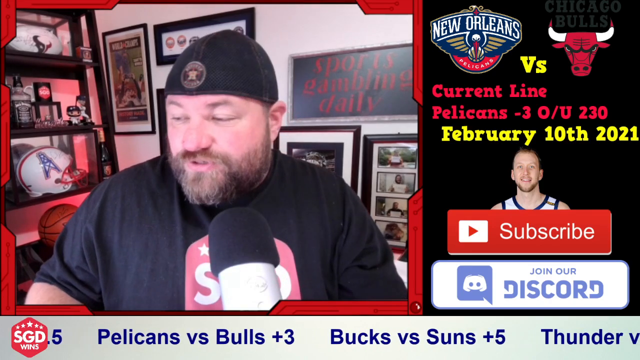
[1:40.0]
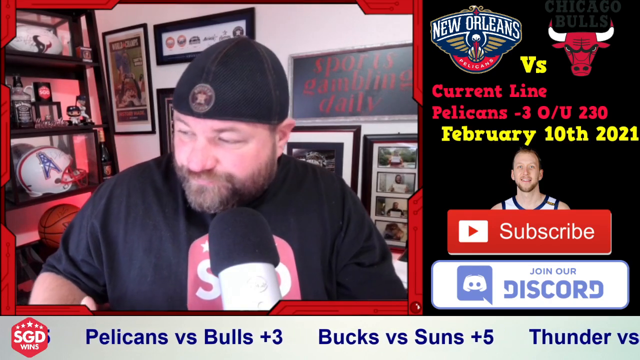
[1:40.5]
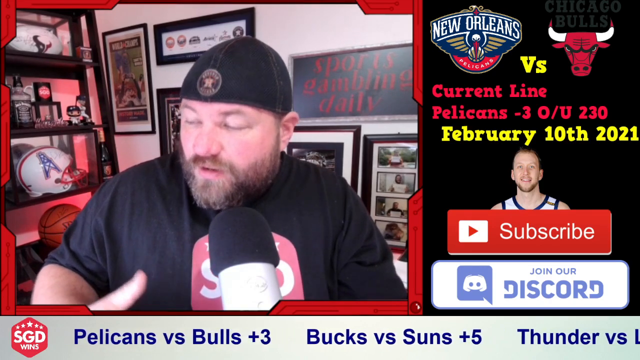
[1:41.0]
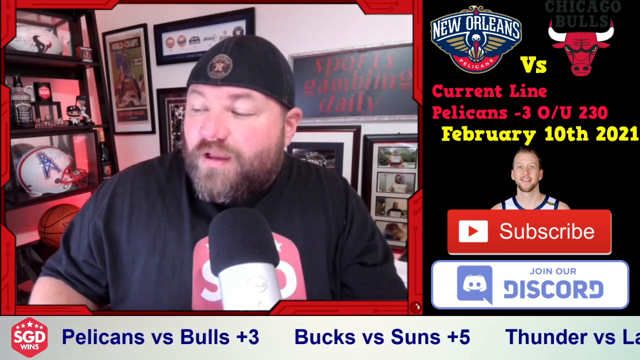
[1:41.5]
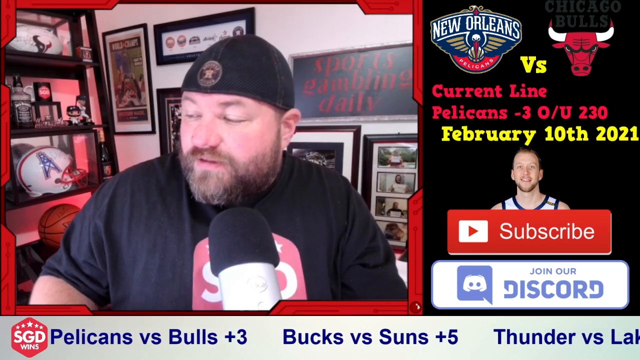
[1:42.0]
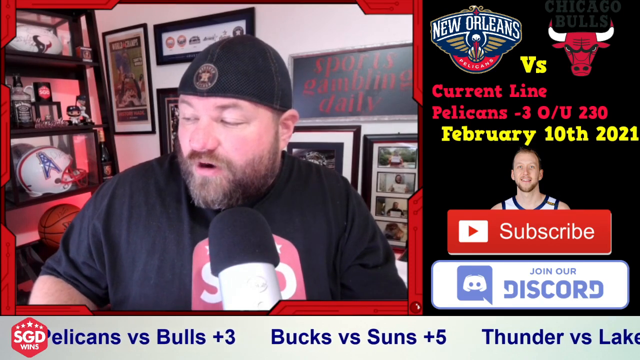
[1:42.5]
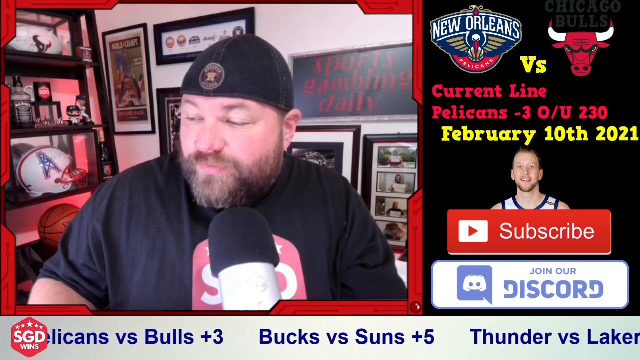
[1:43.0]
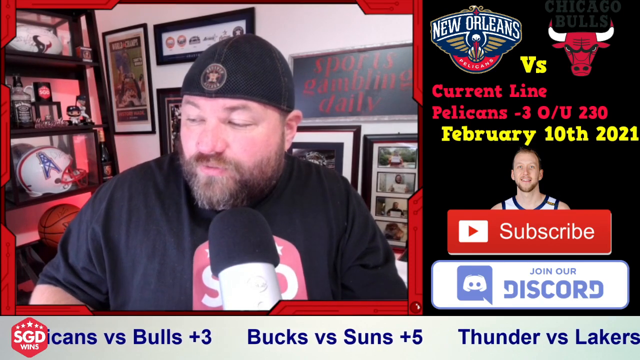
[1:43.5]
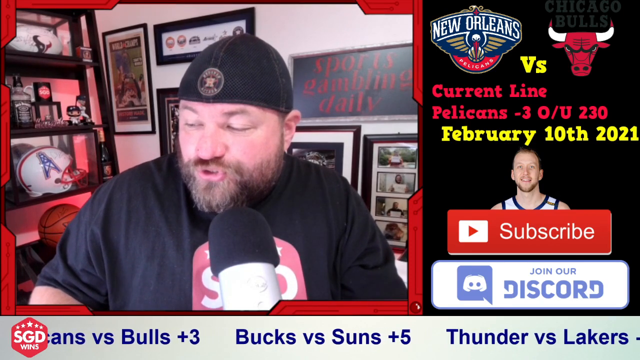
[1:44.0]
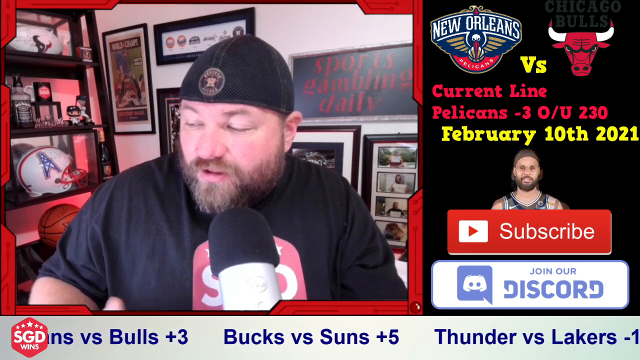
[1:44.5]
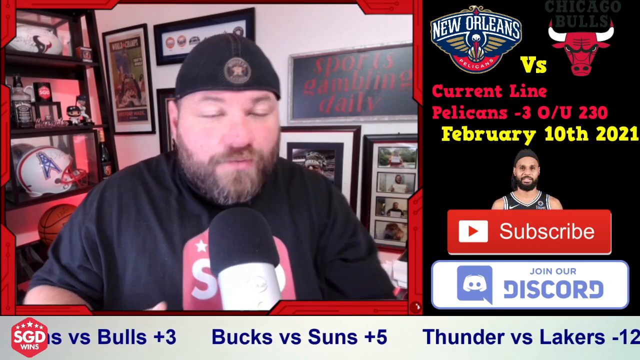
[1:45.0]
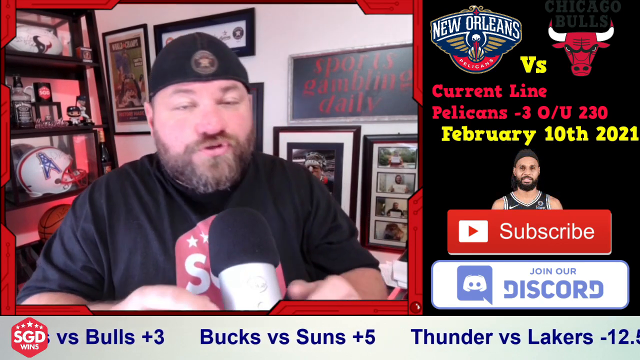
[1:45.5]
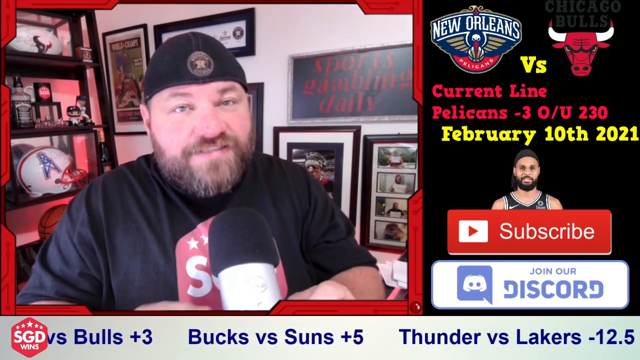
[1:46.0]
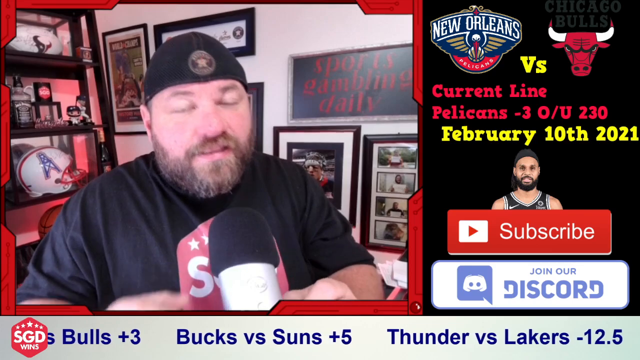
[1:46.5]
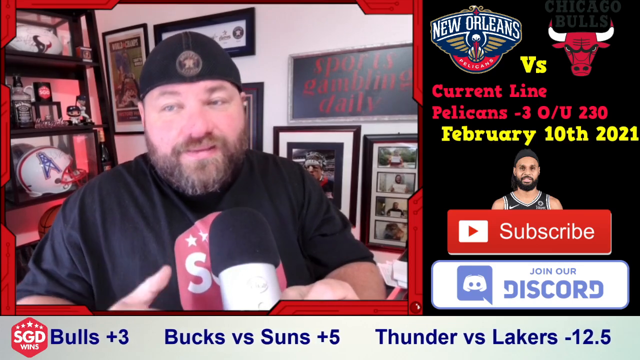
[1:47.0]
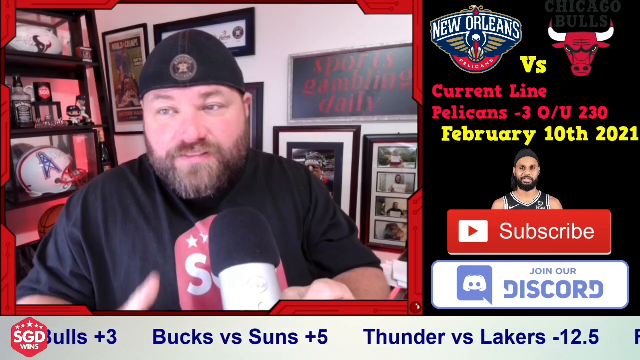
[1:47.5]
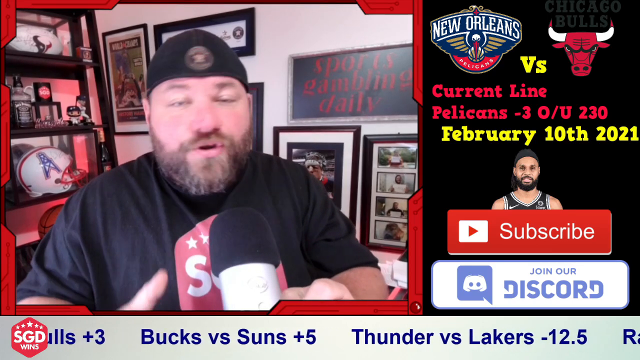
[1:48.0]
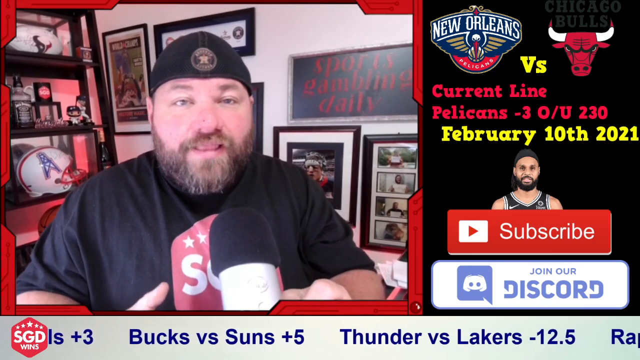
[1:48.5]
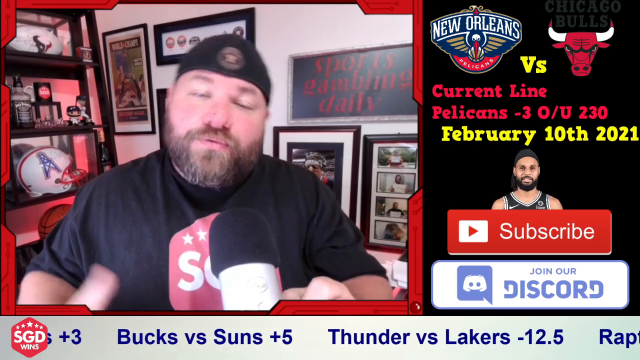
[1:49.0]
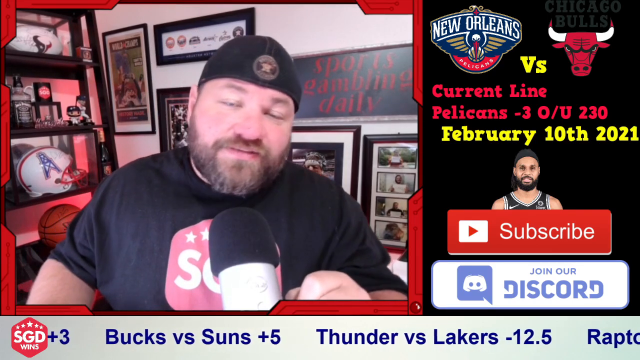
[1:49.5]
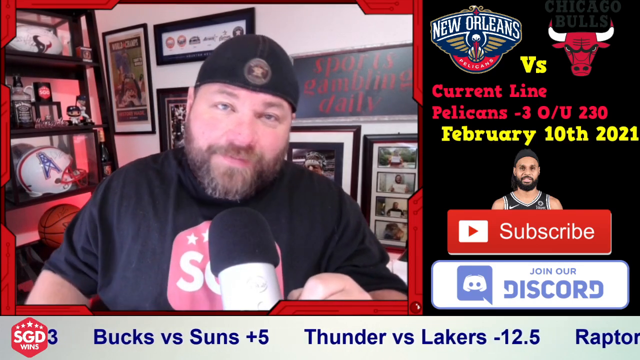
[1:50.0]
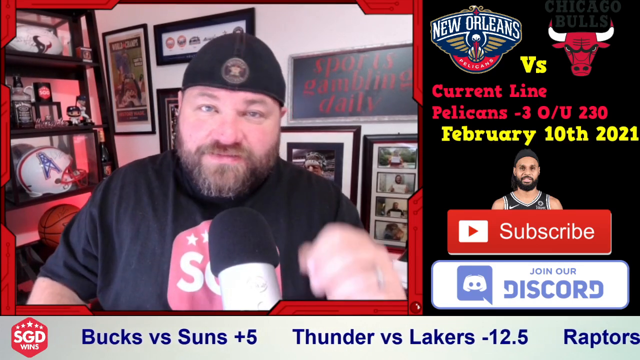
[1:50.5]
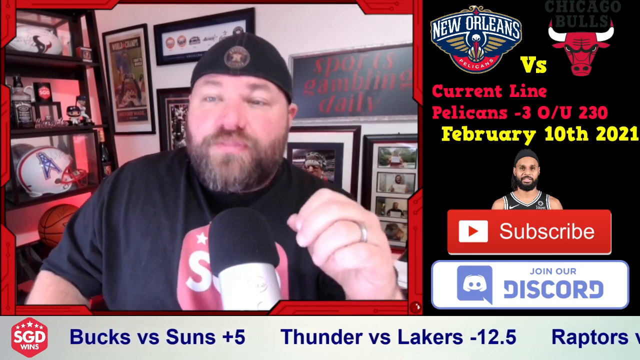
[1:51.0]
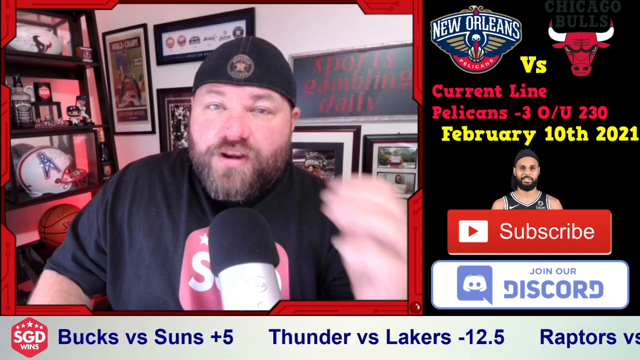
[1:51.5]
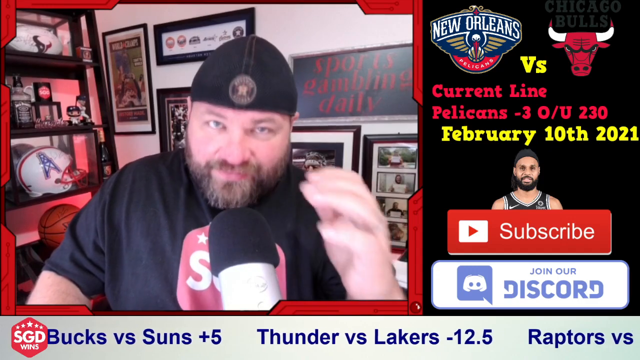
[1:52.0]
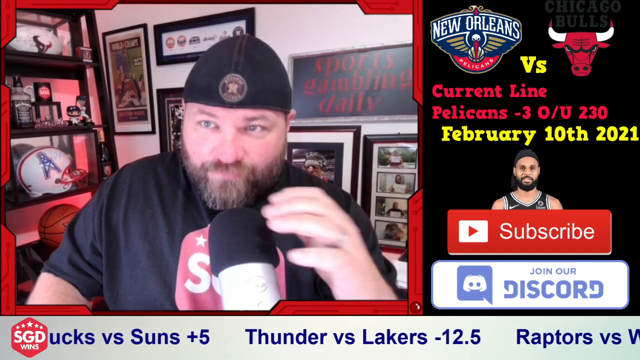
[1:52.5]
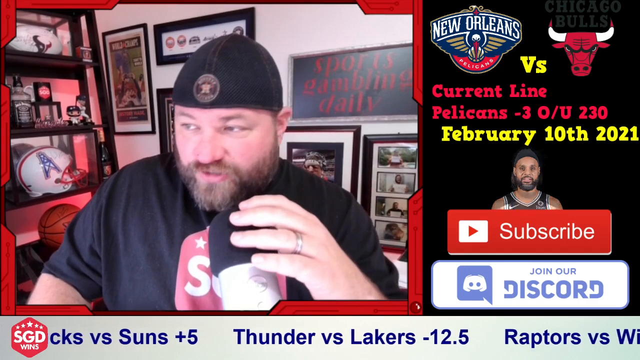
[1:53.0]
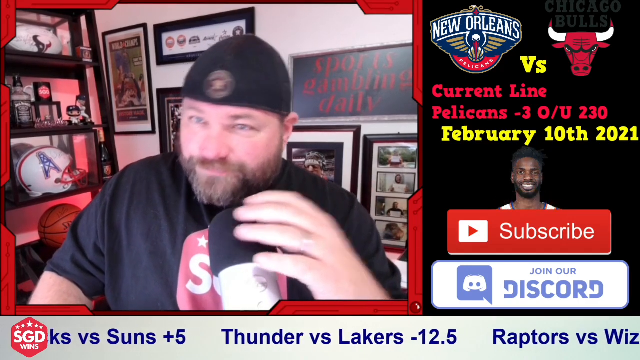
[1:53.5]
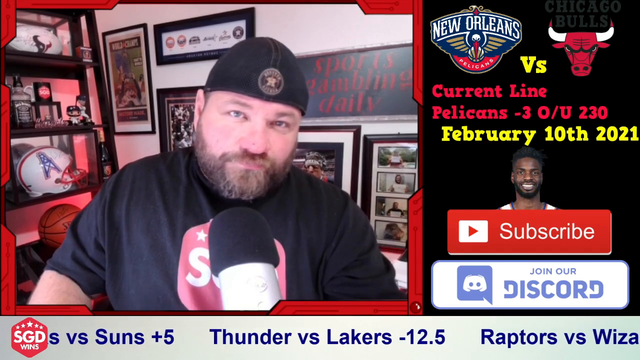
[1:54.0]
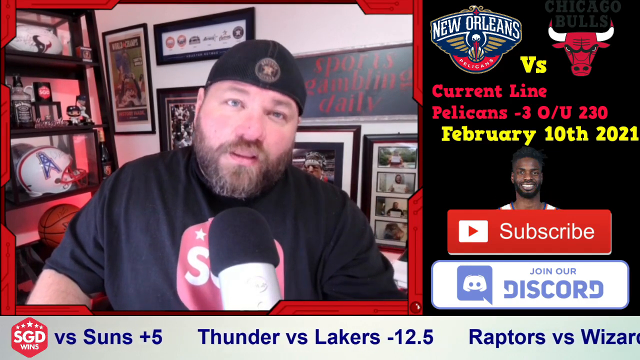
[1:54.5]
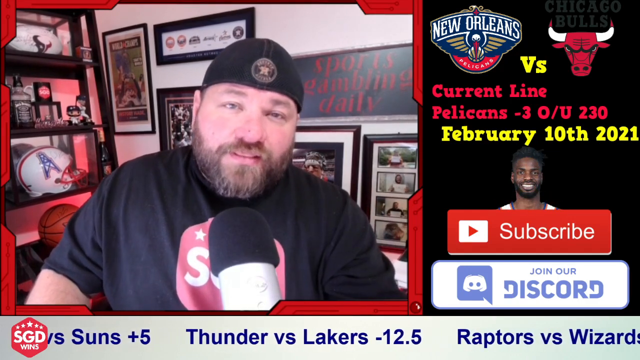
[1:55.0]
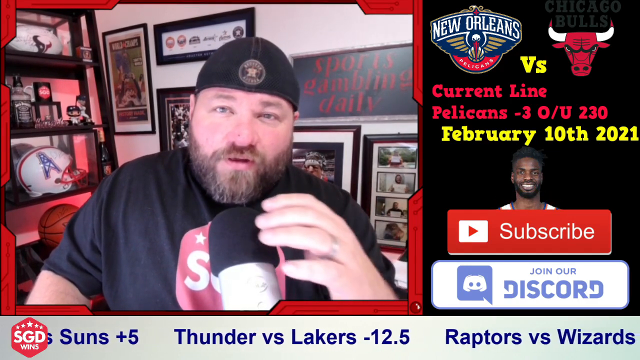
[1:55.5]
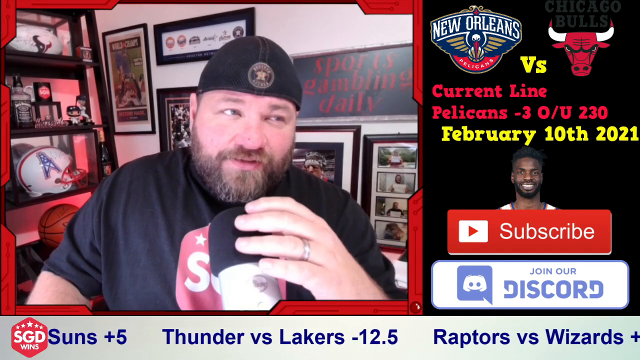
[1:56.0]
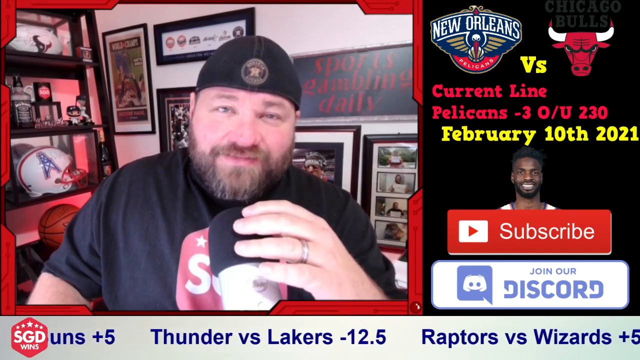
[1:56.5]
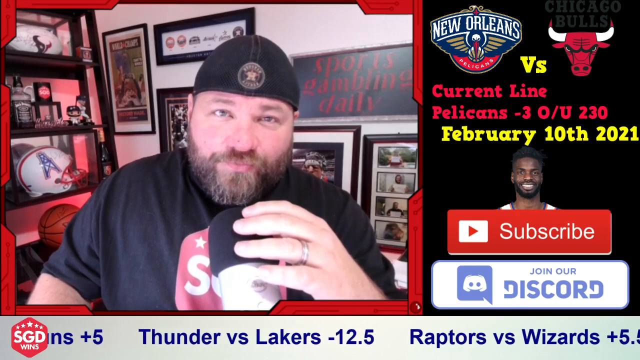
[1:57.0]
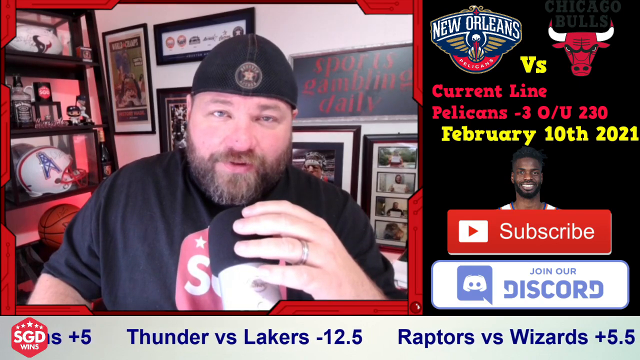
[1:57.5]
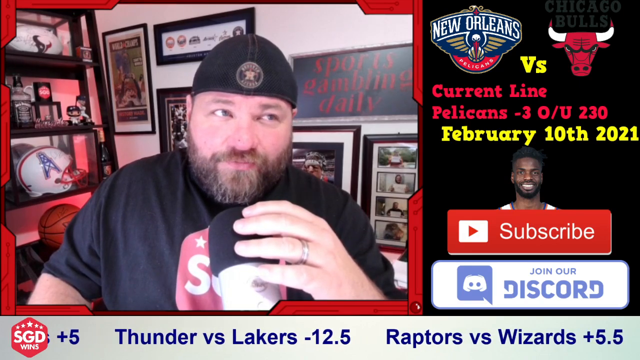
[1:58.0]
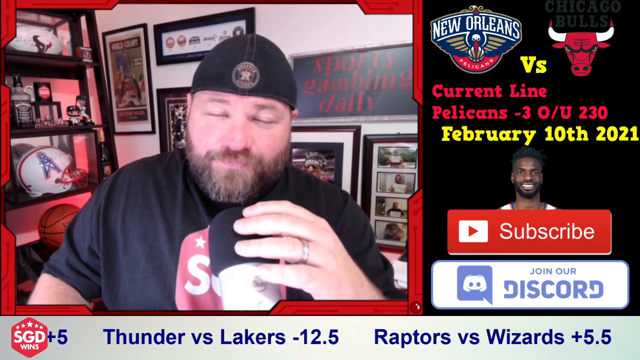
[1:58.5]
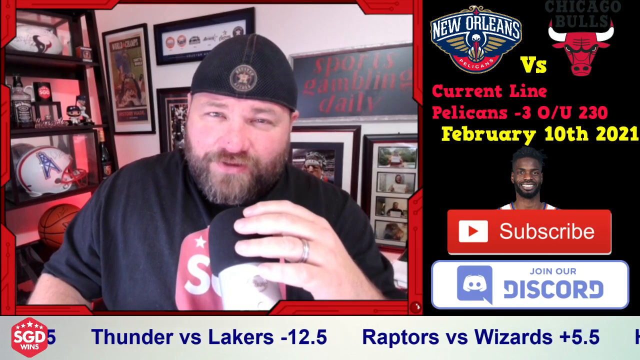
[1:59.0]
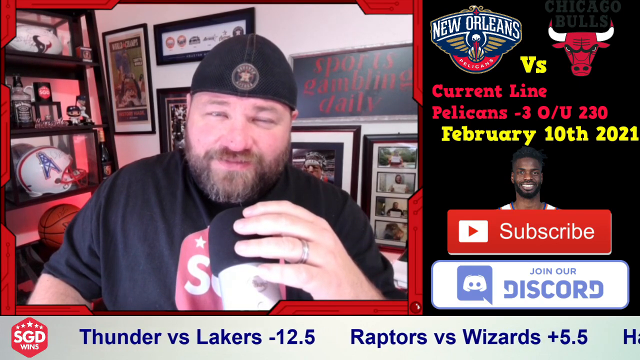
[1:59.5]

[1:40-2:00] On the left of the video, a man sits in front of a big black microphone and talks, sometimes using his hand. He wears a gold wedding band on the ring finger of his left hand. On the right of the screen is the New Orleans Pelicans versus a bull, for the Chicago Bulls, with text reading "Current Line Pelicans -3 O/U 230" and "February 10th, 2021". Right below the date, different pictures of players keep changing; the players wear what may be different colored jerseys, some smile for the camera, and some are African American while others are Caucasian. Below is a red button that says "Subscribe" and a white button with blue print that says "Join our Discord".